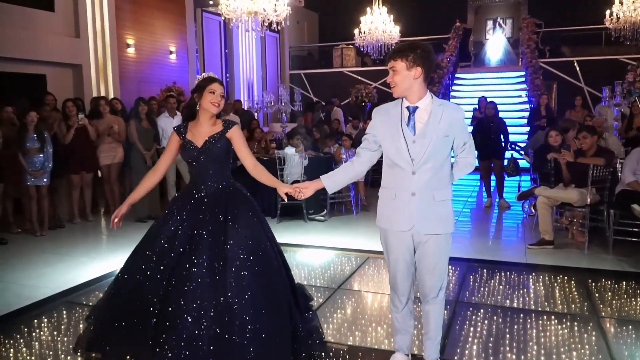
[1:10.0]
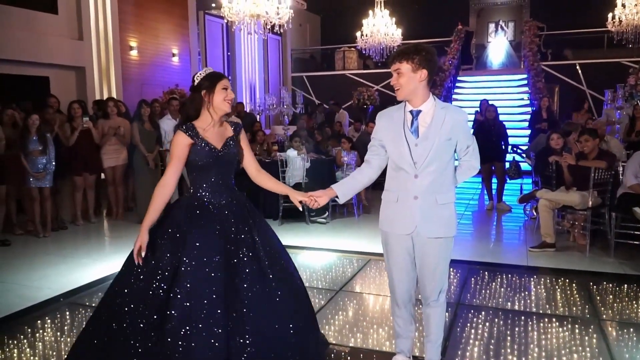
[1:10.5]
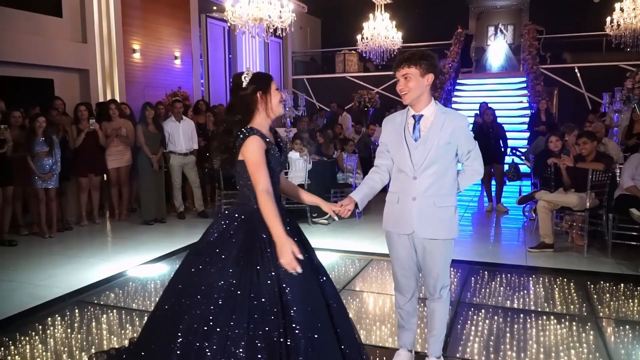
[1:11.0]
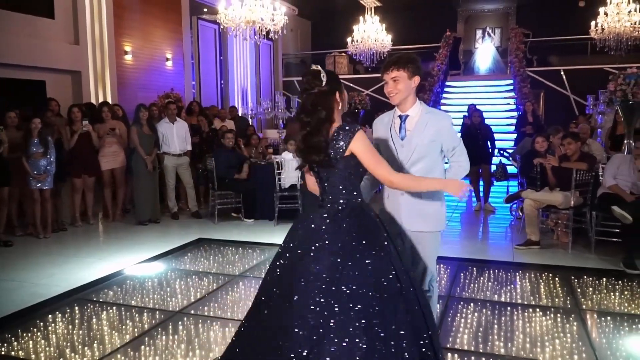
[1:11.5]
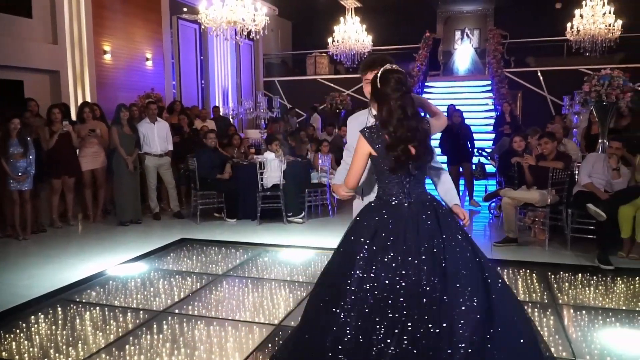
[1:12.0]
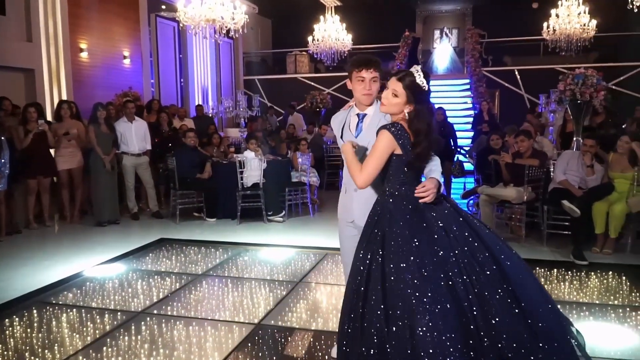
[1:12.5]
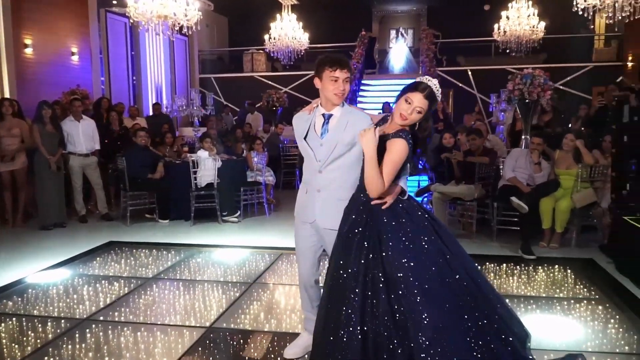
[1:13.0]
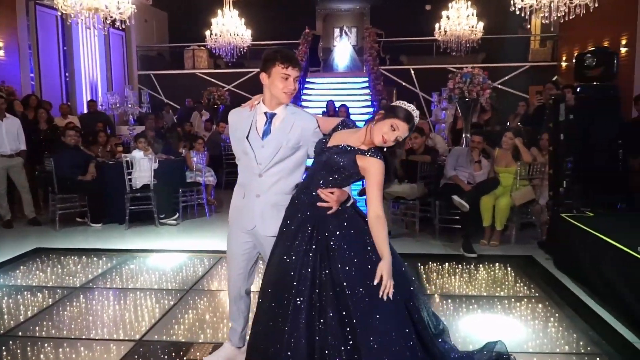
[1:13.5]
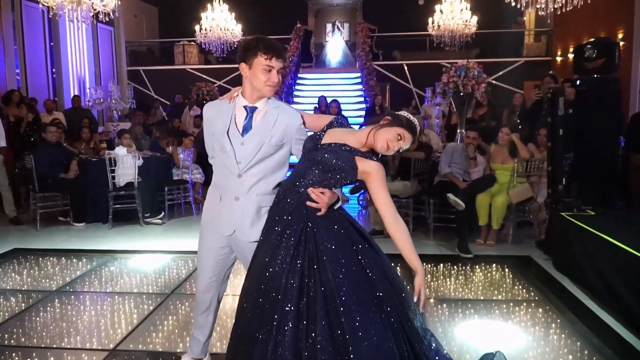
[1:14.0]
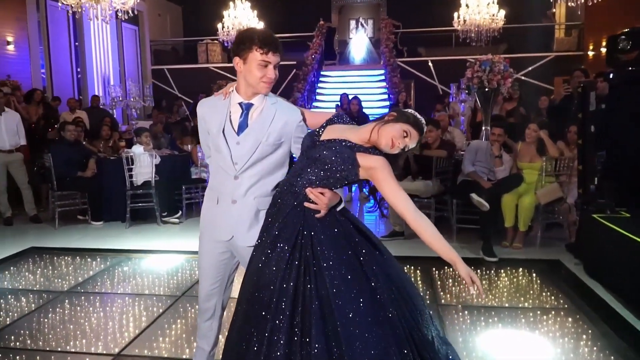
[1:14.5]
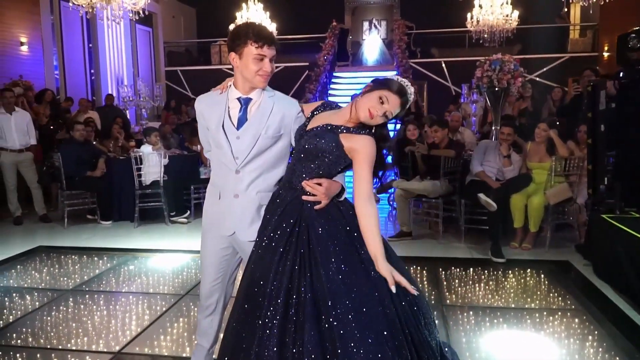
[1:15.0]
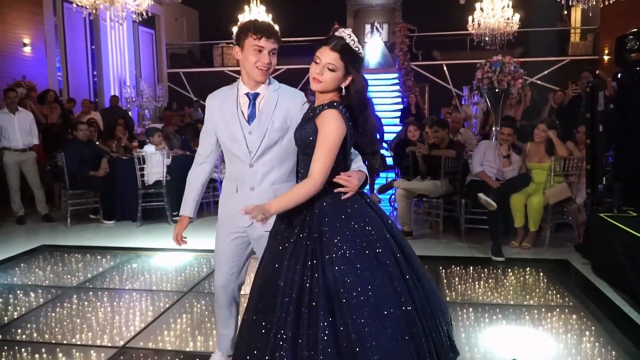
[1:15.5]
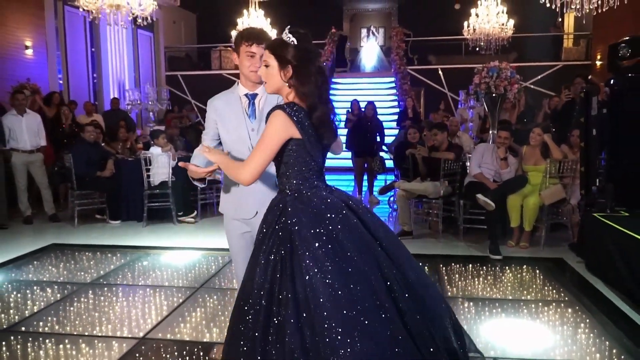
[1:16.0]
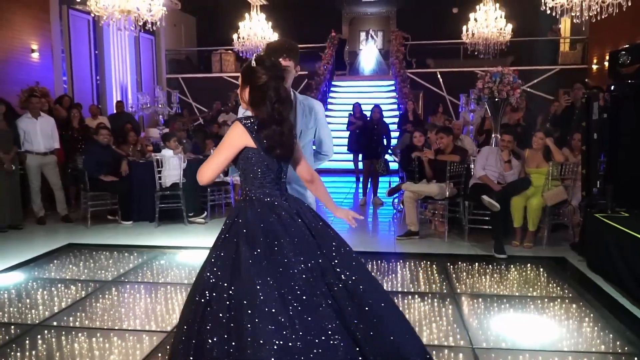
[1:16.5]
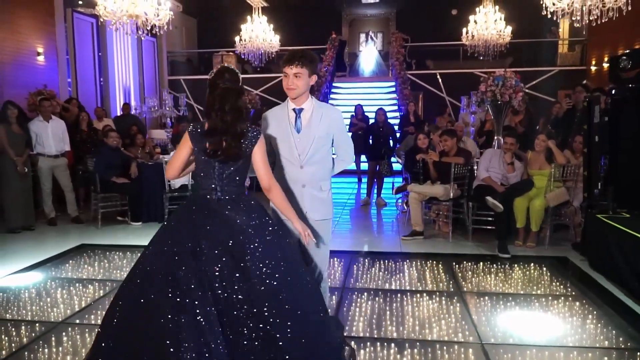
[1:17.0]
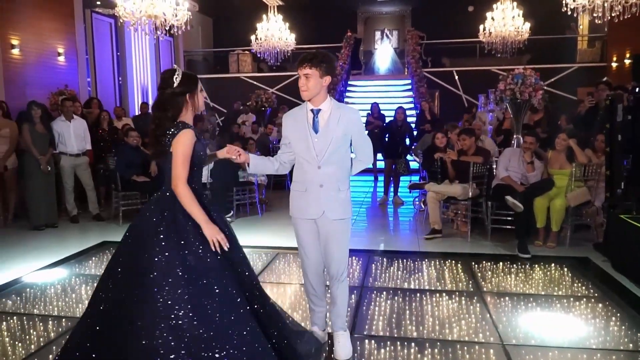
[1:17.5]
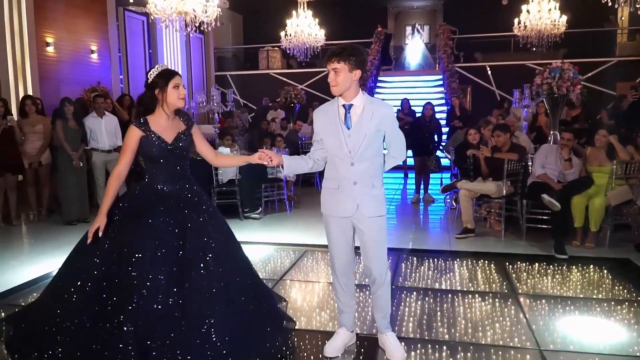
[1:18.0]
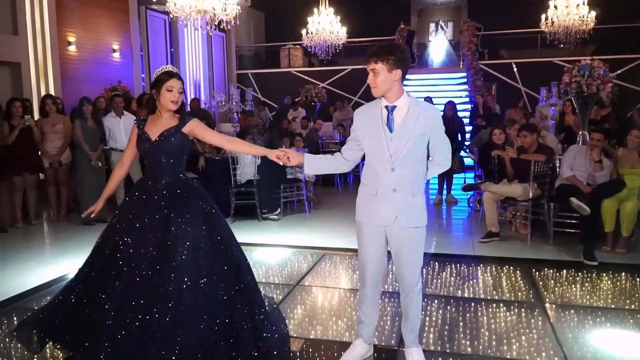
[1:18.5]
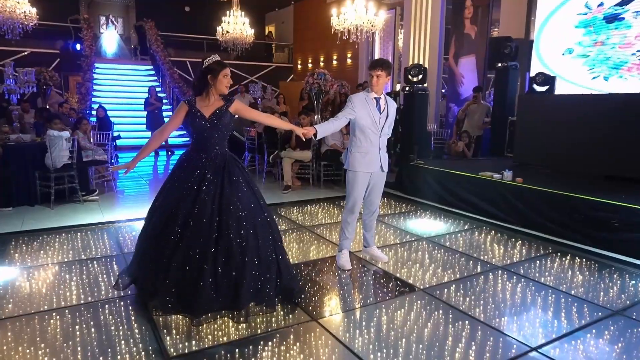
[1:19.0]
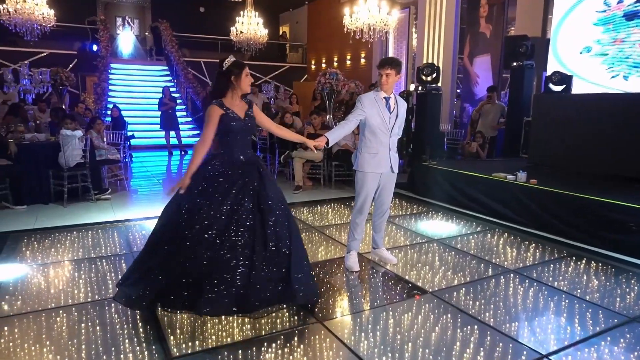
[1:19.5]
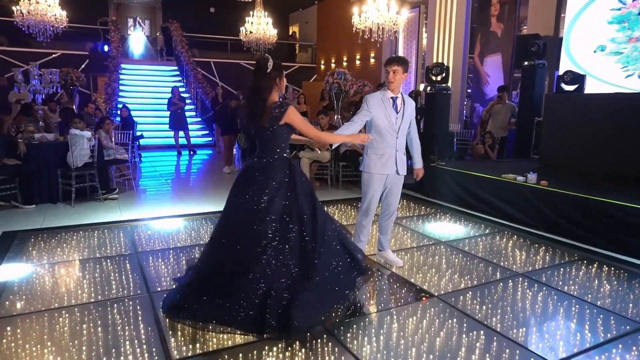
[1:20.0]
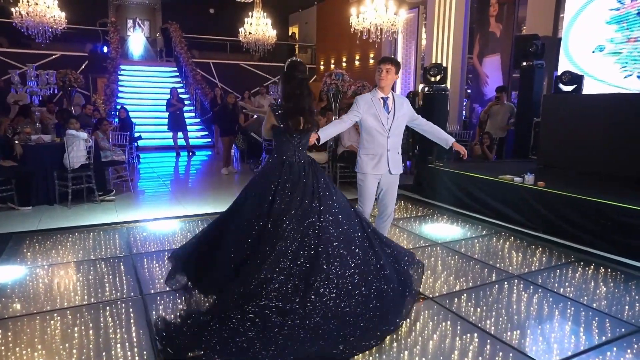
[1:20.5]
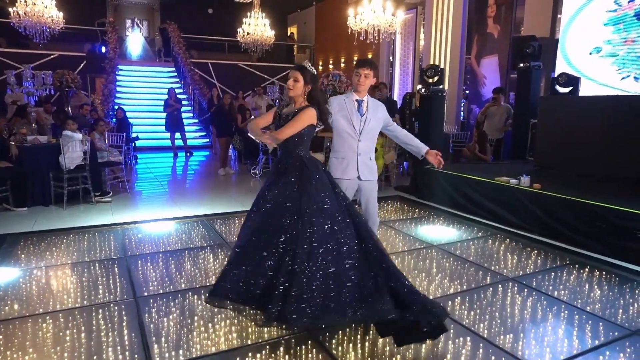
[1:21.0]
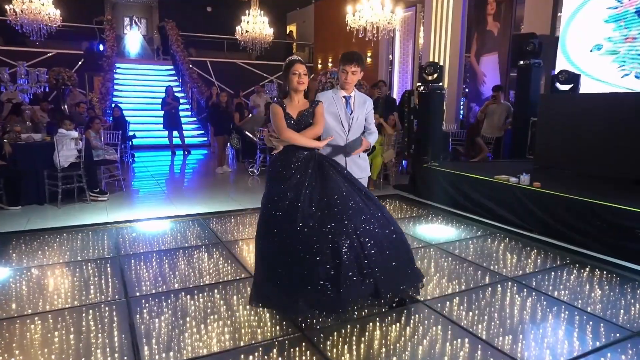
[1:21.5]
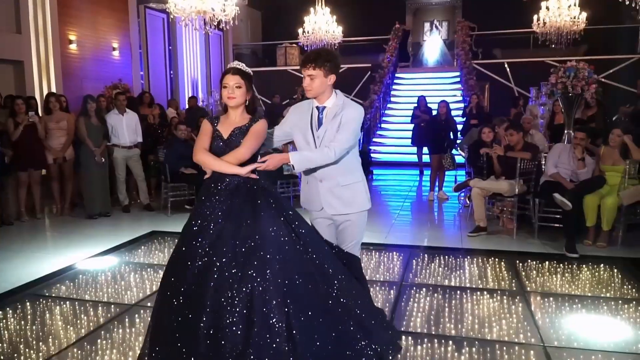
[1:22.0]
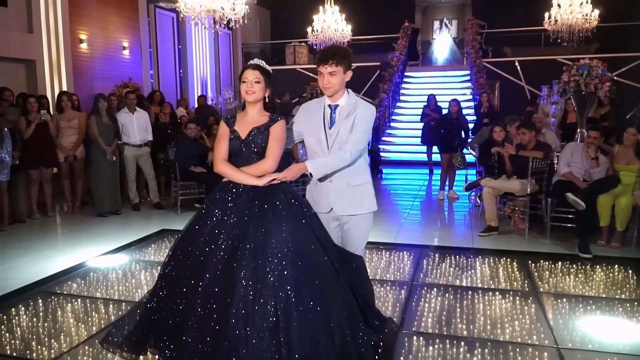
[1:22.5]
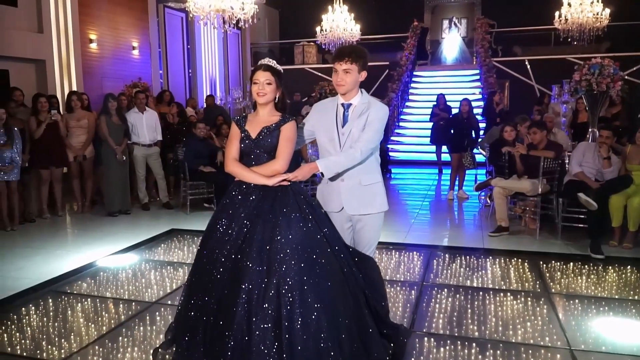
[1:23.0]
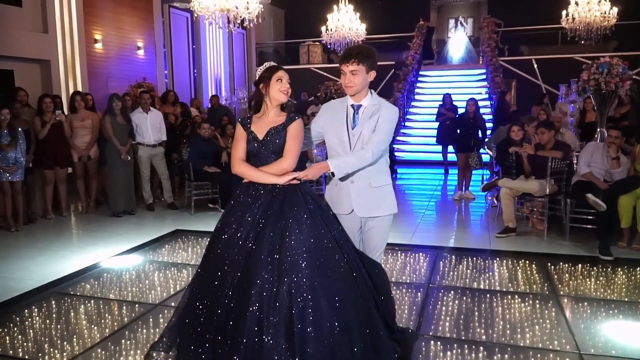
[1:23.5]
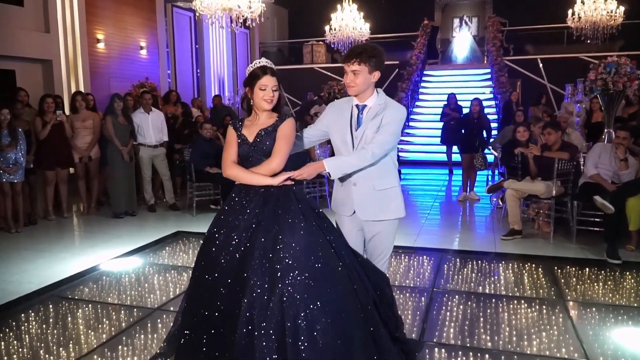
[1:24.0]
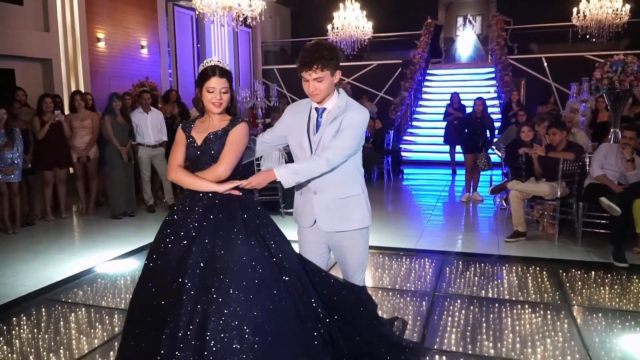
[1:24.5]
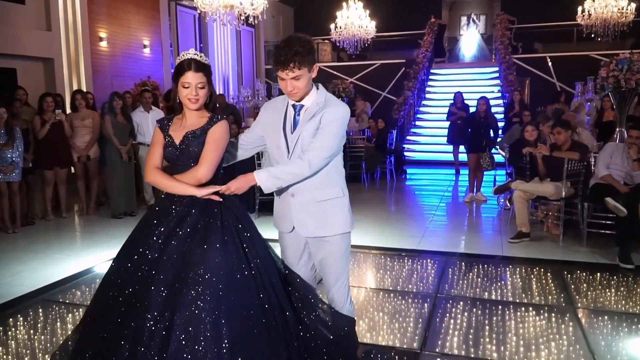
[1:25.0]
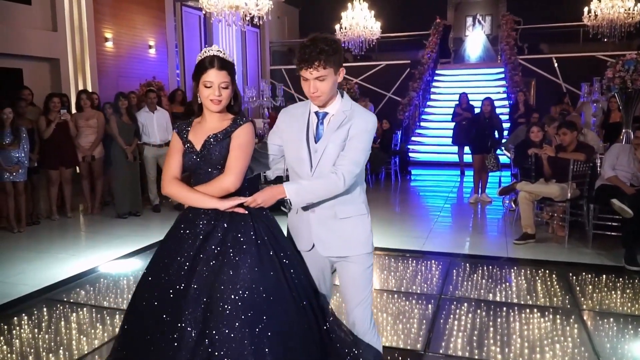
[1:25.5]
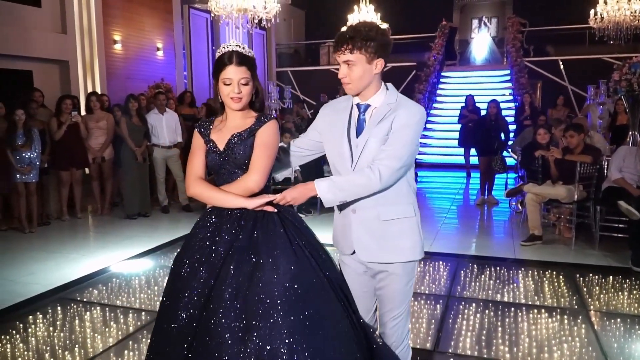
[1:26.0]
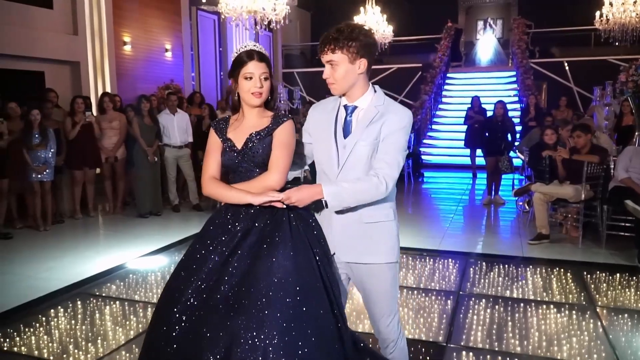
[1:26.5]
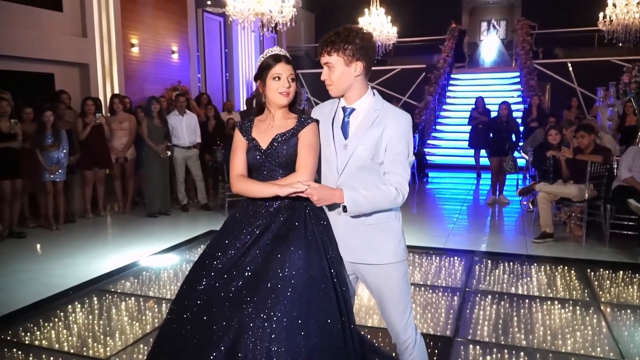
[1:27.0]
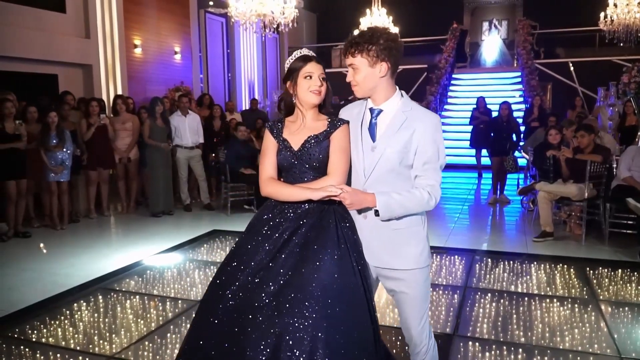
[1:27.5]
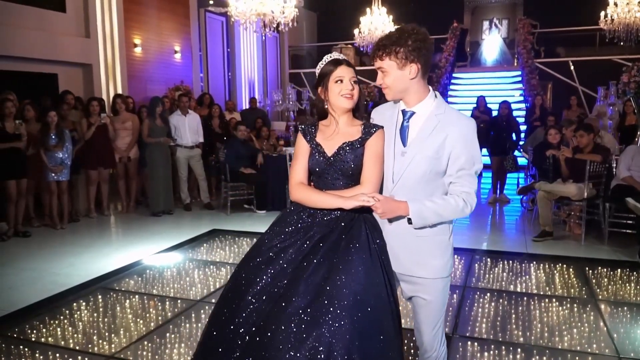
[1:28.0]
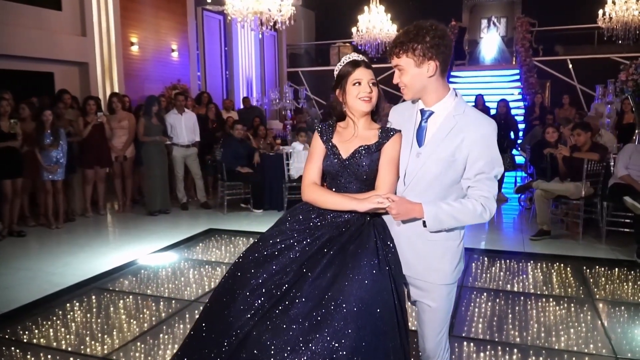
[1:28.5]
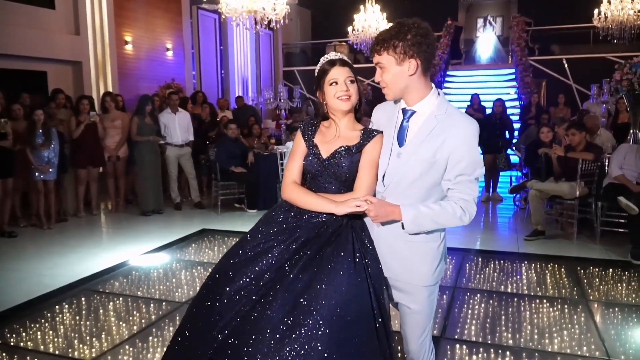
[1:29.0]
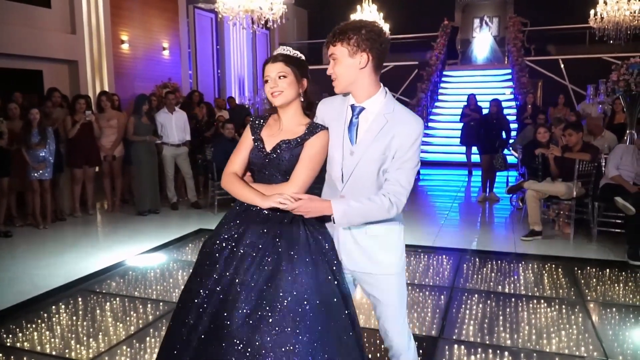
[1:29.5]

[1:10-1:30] The couple dances on the stage in the middle of the room in a kind of slow, methodical dance. The boy stands still while the girl moves from one side of him to the other, kind of bowing. They move in unison, not fast but not completely slow either; it is probably a traditional ceremonial dance. Several dozen people are in the room, neither a large nor a small crowd, probably family and friends gathered to celebrate the occasion.